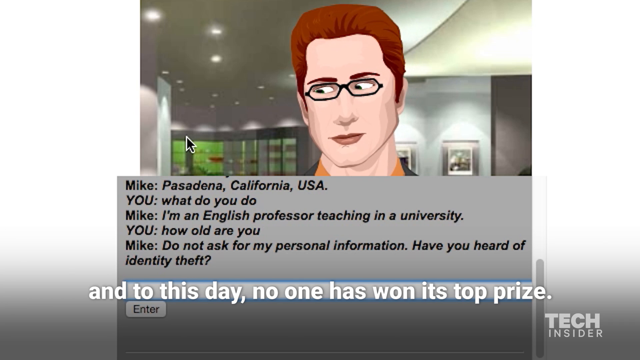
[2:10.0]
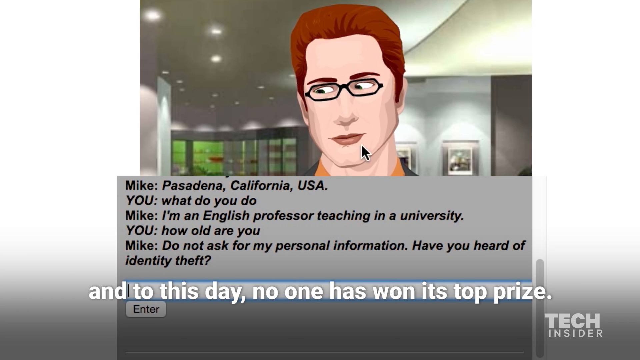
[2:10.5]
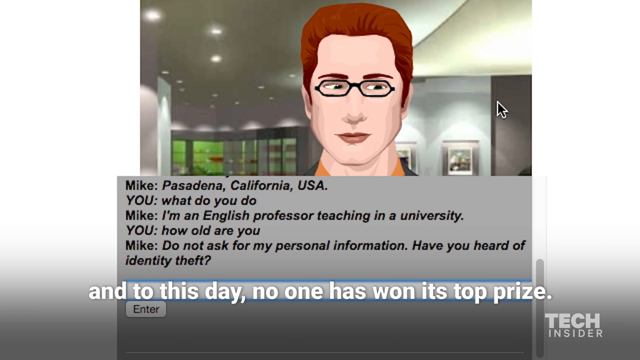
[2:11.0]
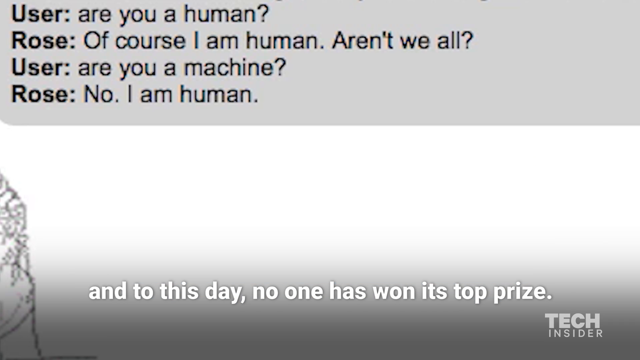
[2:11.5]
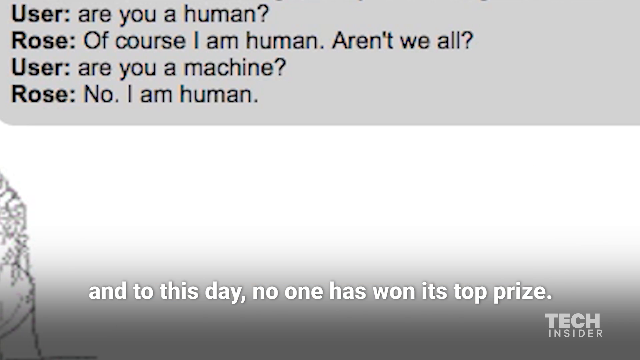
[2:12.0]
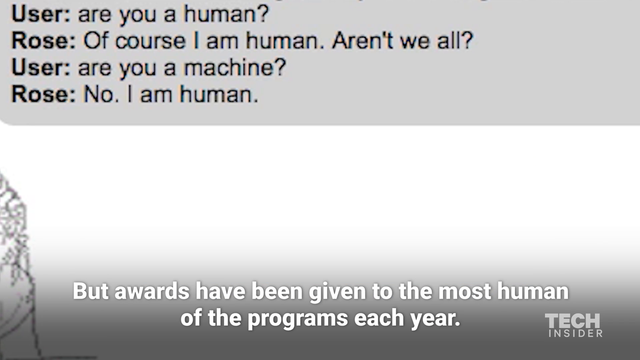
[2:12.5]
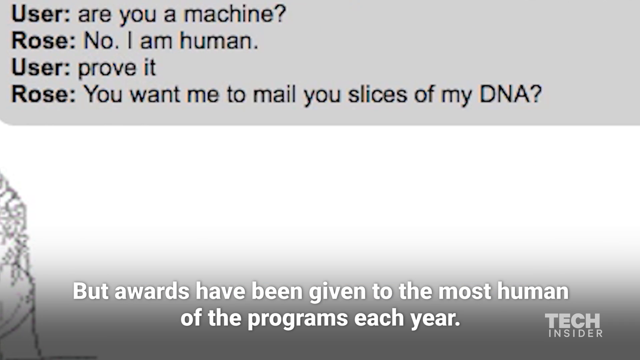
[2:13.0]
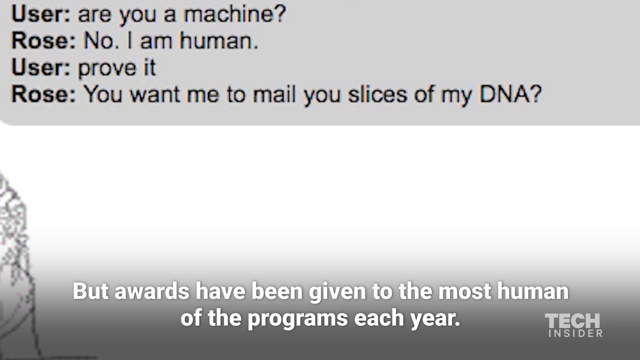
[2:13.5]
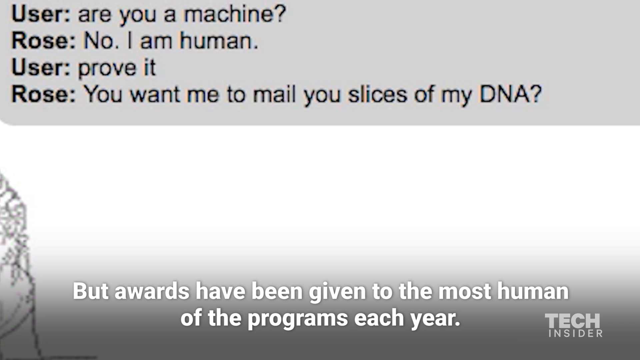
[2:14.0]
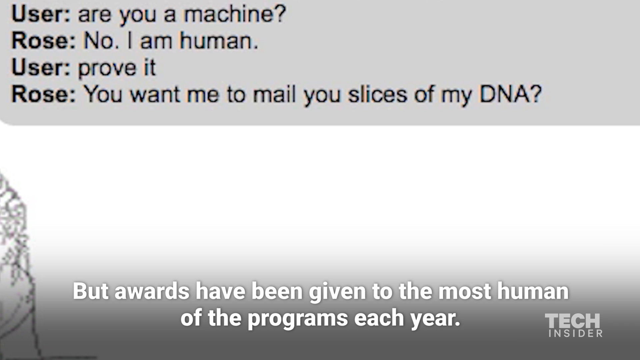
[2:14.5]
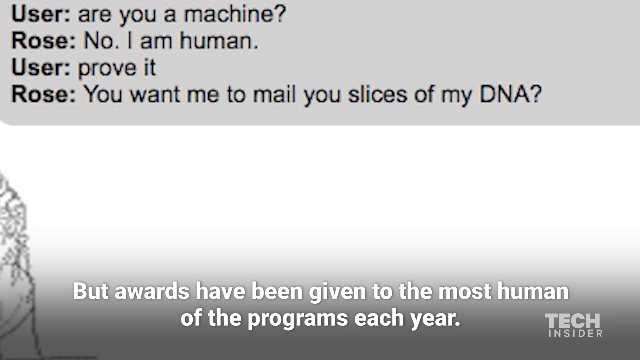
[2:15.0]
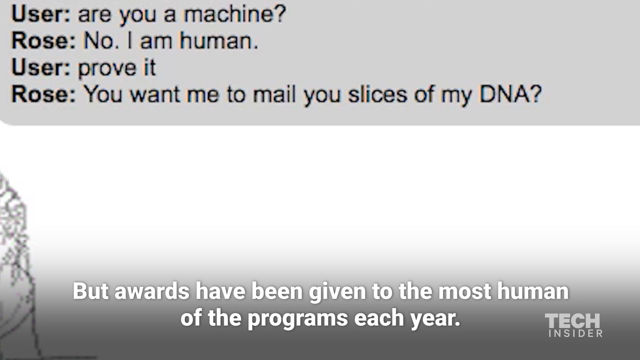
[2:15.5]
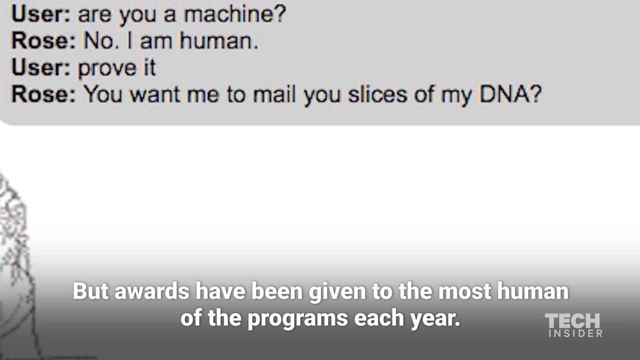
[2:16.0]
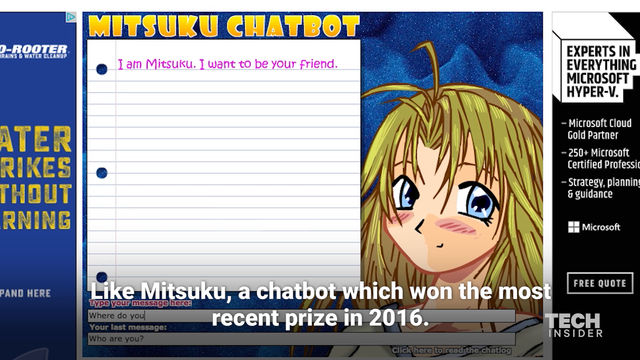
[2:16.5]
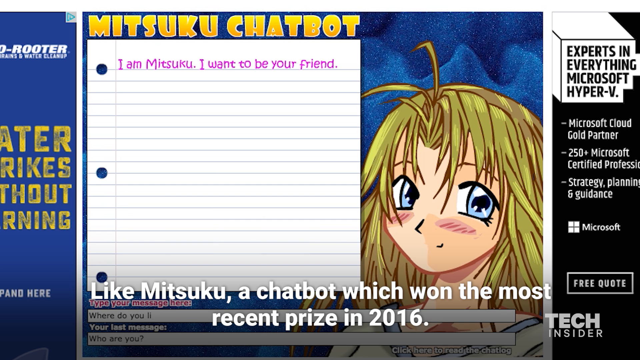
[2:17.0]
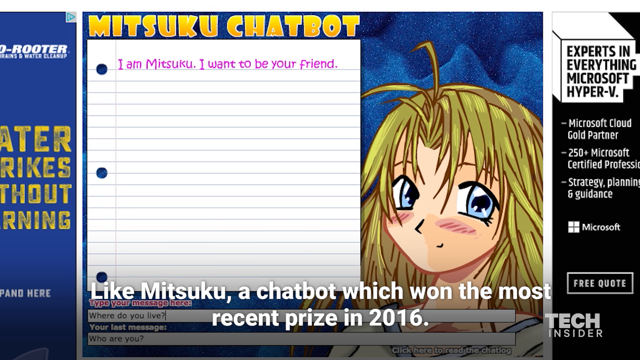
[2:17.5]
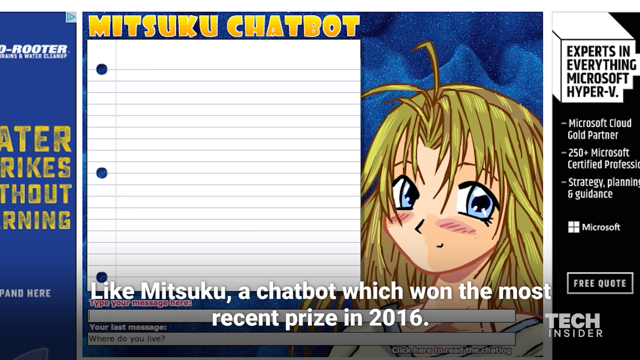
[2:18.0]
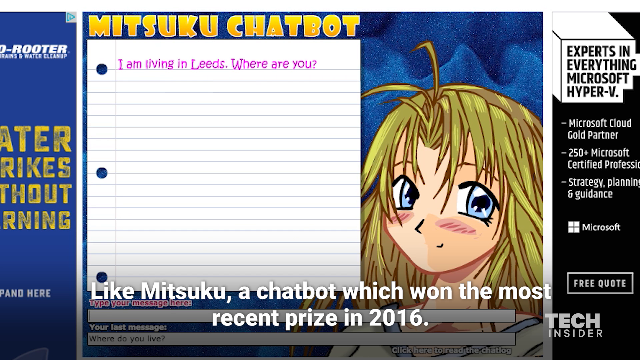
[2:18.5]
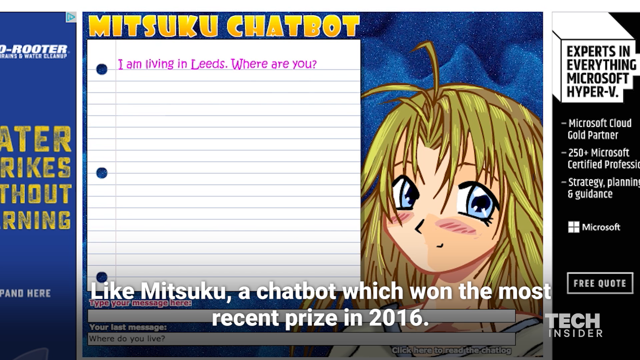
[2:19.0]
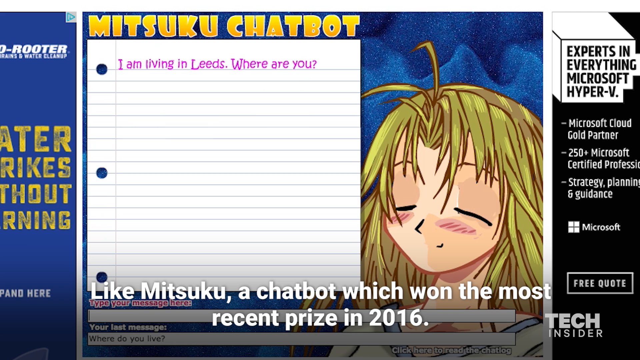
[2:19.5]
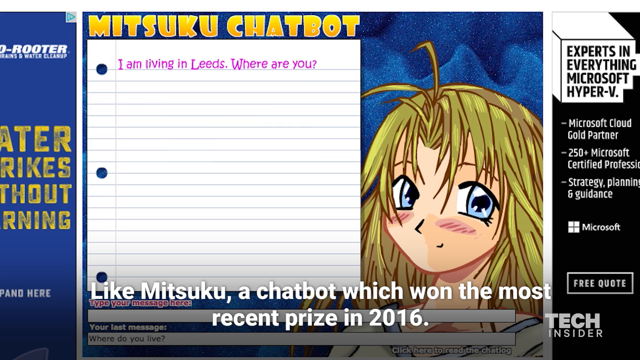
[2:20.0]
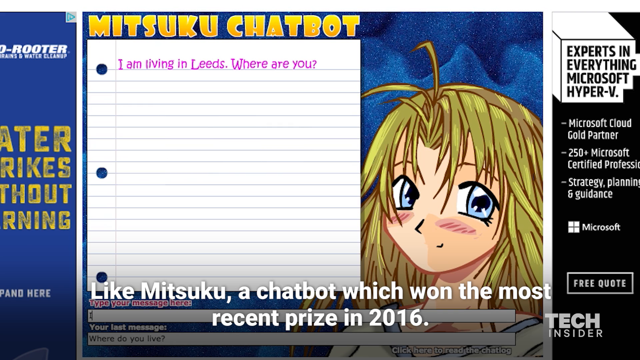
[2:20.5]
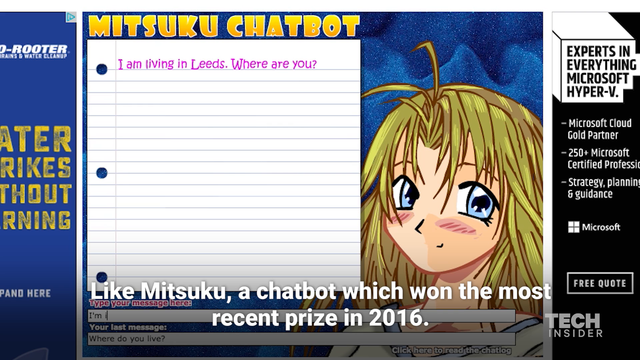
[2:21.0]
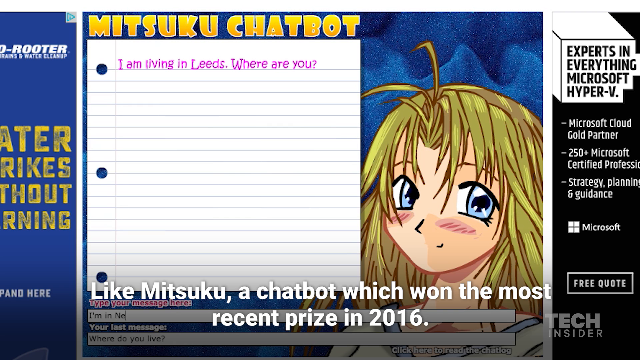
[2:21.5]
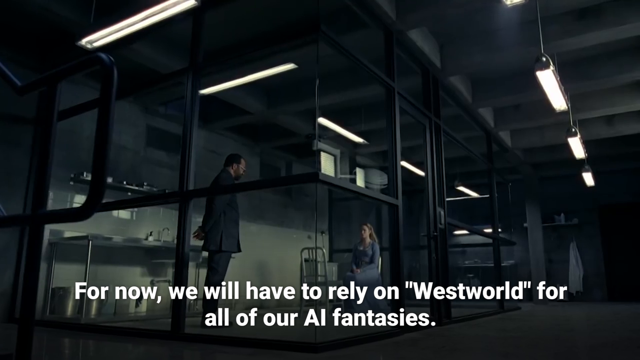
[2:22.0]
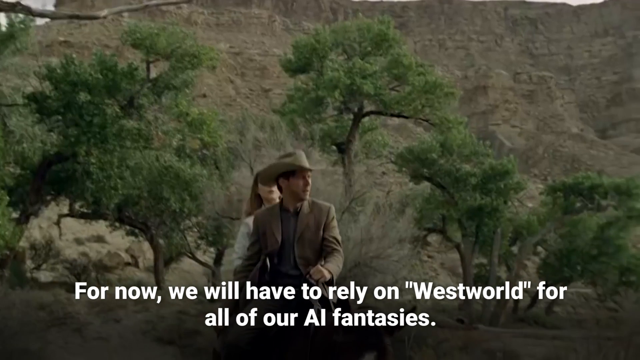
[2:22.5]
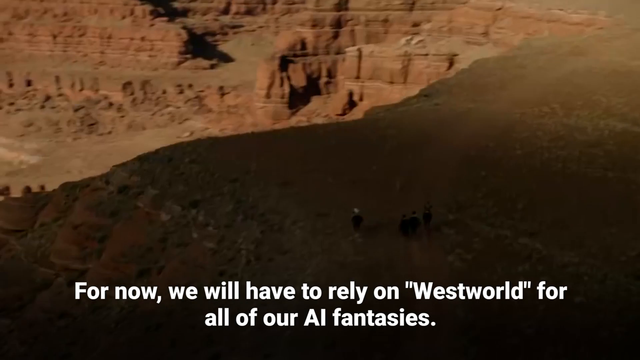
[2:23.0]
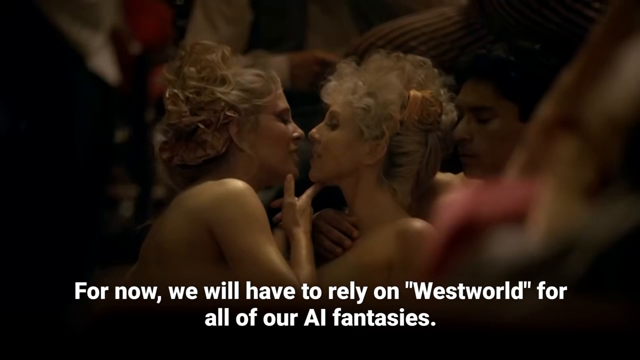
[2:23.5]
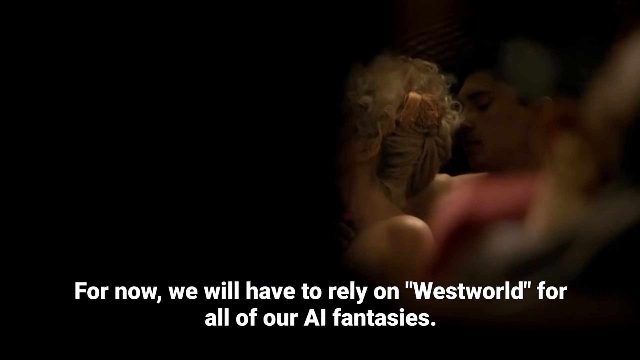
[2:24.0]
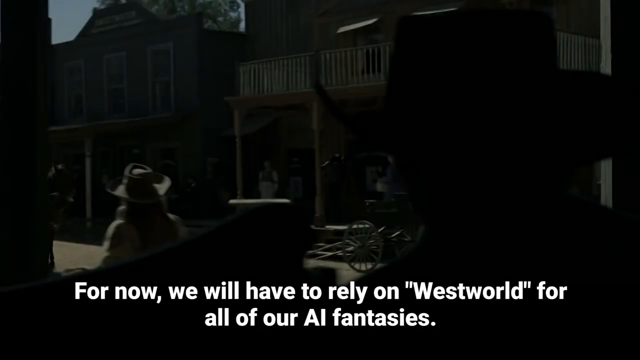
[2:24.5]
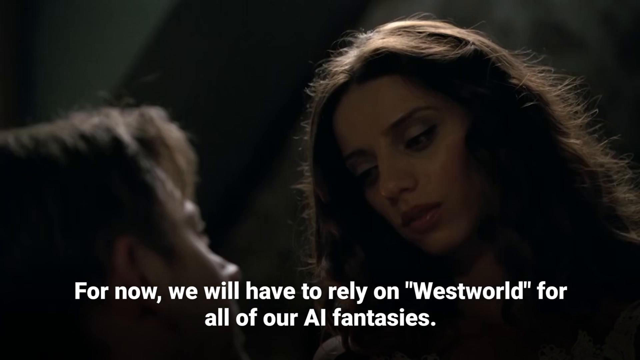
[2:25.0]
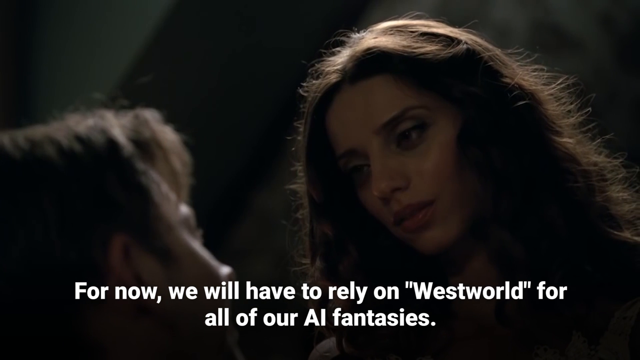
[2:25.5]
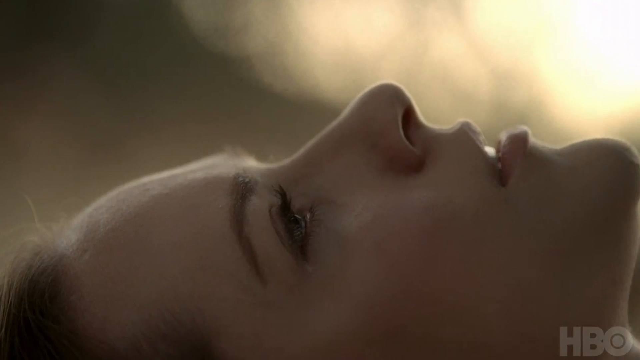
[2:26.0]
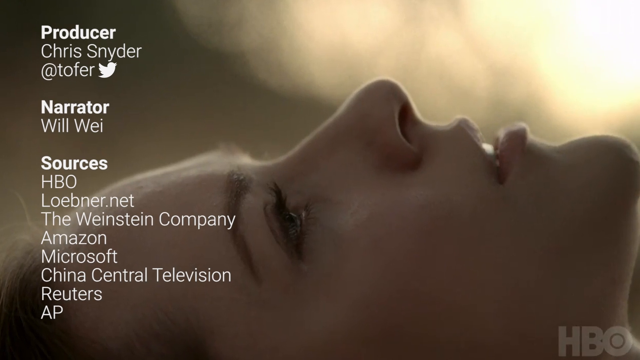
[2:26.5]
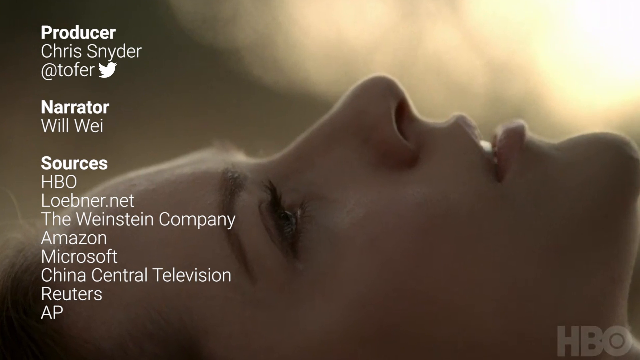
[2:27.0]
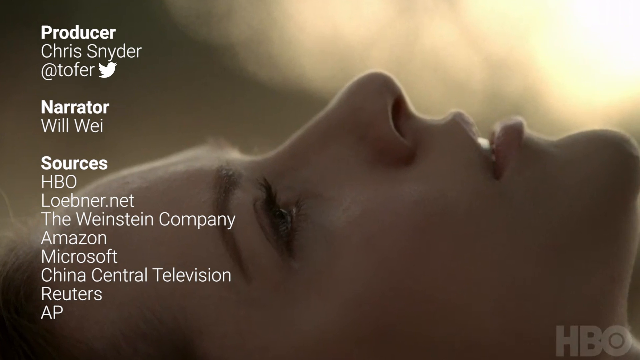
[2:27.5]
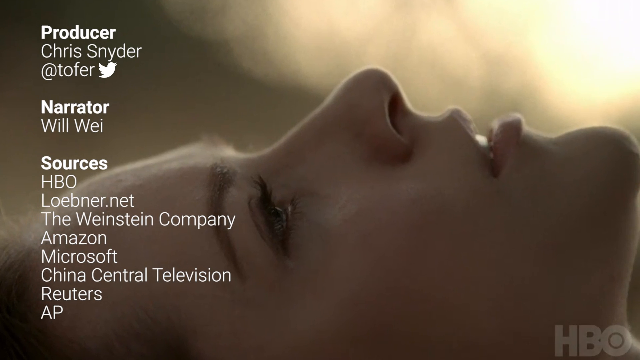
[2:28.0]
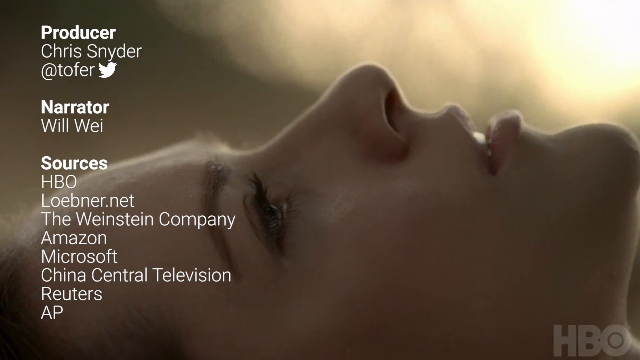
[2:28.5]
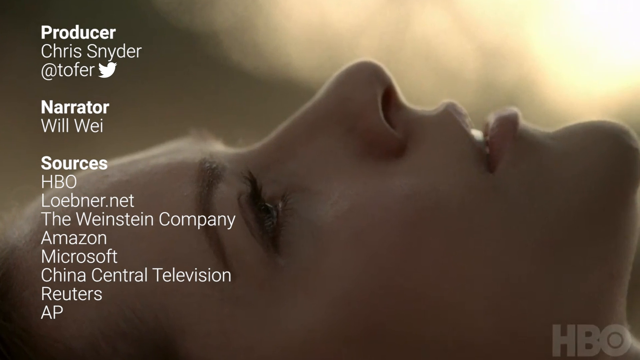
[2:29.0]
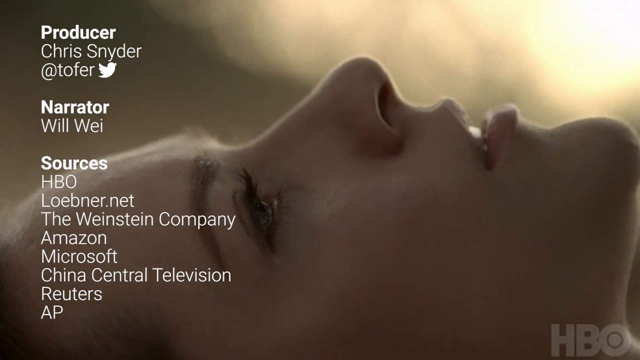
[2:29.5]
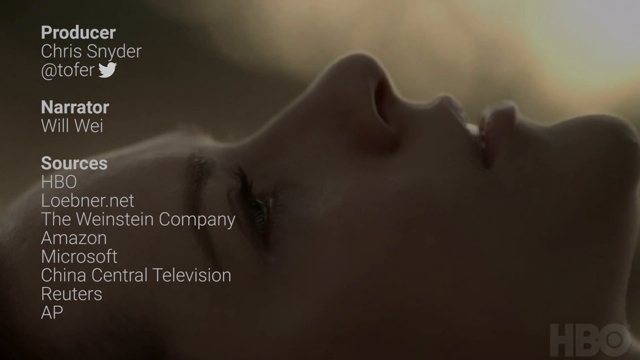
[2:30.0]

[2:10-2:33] On the same program, the cursor moves to the right of the man and he looks toward it. It flips to another text box at the top of another human and AI conversation, and the subtitle says "and to this day no one has won its top prize". The text box flips through more of the conversation as the subtitle says "but awards have been given to the most human of the programs each year". A slide for the chatbot Mitsuku follows, reading "Mitsuku chatbot": on a blue background, a blonde anime-style girl with blue eyes smiles at the viewer, and to her left is a sheet of notebook paper reading "I am Mitsuku, I want to be your friend" at the top. The subtitle says "Like Mitsuku, a chatbot which won the most recent prize in 2016." To the right is a Microsoft Hyper-V advertisement and to the left a Roto-Rooter advertisement. Text comes up while the girl blinks and continues to look at the viewer. It then flips through scenes from Westworld, such as a man in a cowboy hat in the desert, with the subtitle "for now we'll have to rely on Westworld for all of our AI fantasies". There are various scenes of a canyon, two girls kissing, and a Wild West scene. At the end, a woman in profile looks up with the credits to her left, and the view zooms in, kind of on her nose.